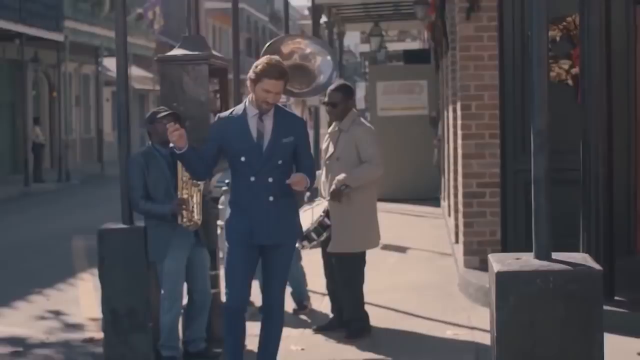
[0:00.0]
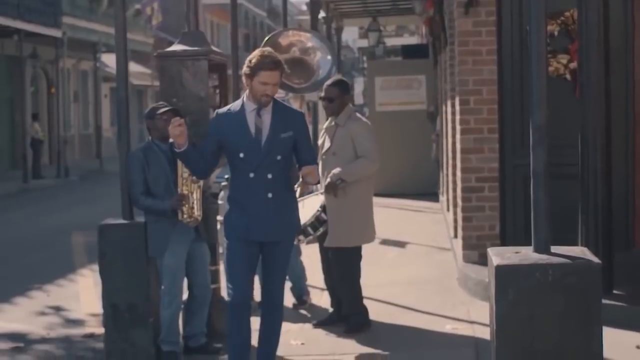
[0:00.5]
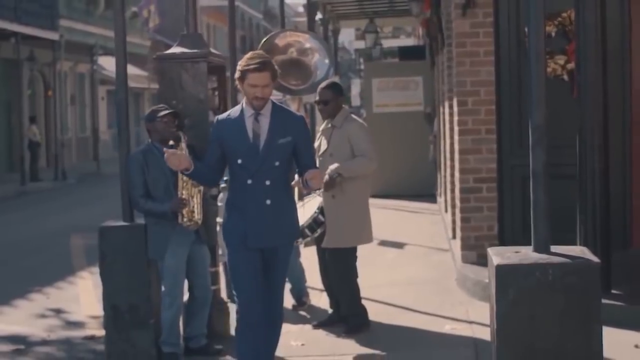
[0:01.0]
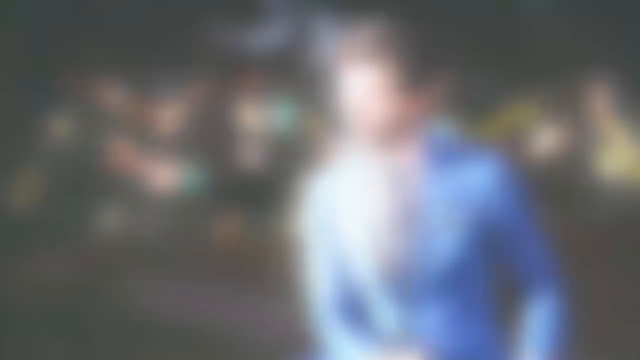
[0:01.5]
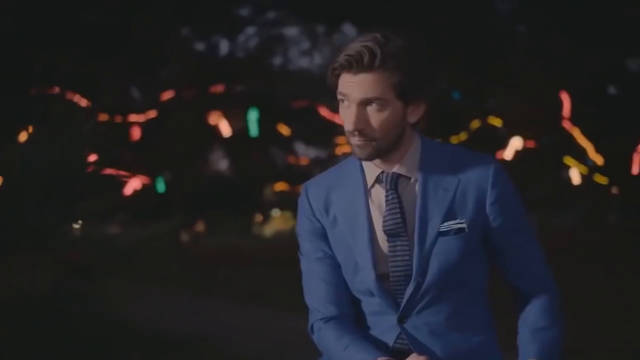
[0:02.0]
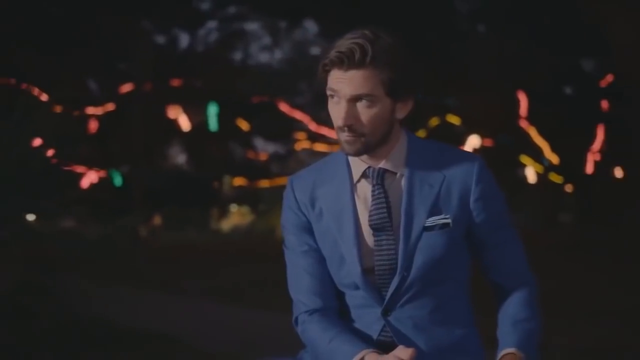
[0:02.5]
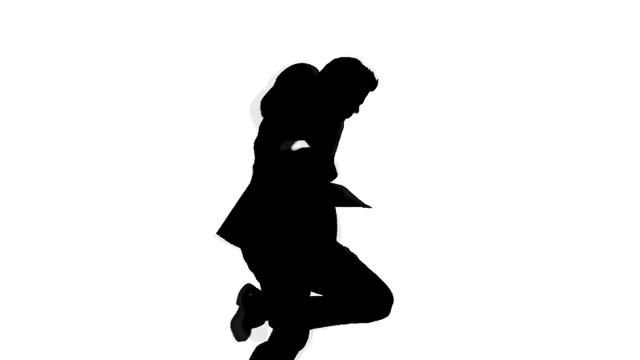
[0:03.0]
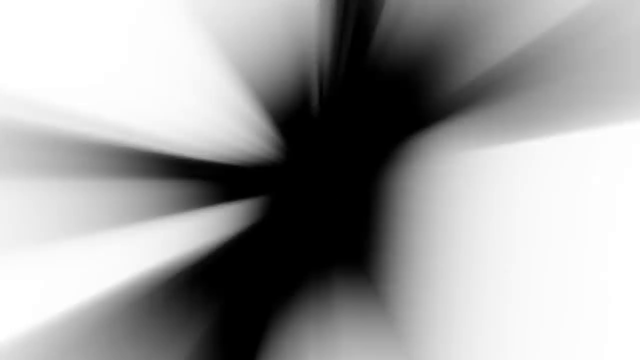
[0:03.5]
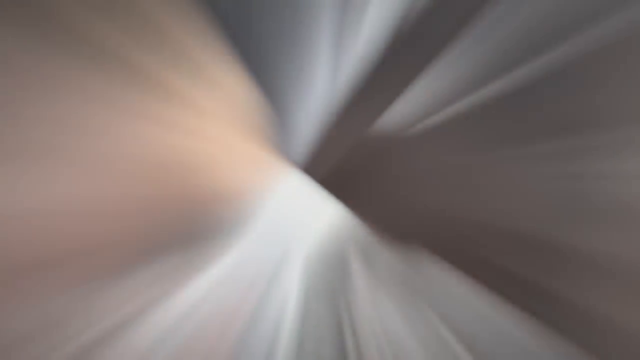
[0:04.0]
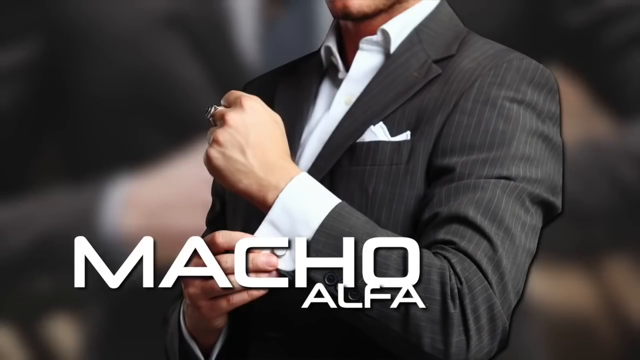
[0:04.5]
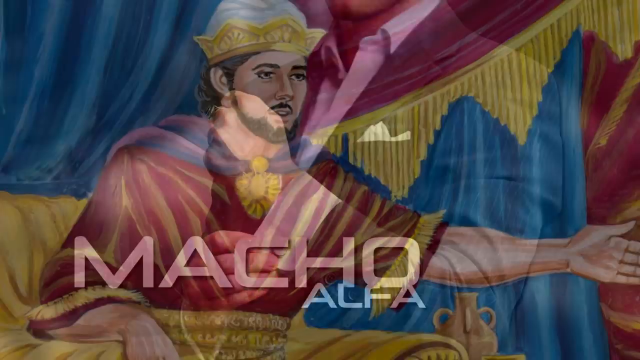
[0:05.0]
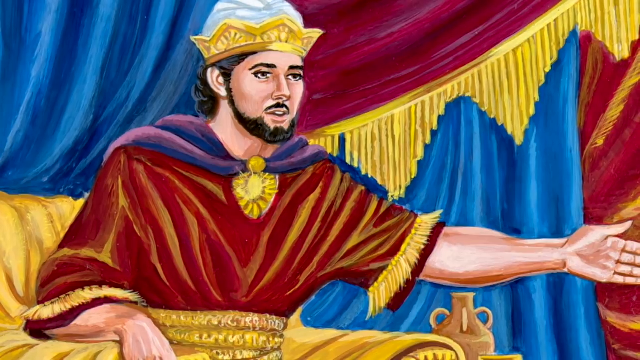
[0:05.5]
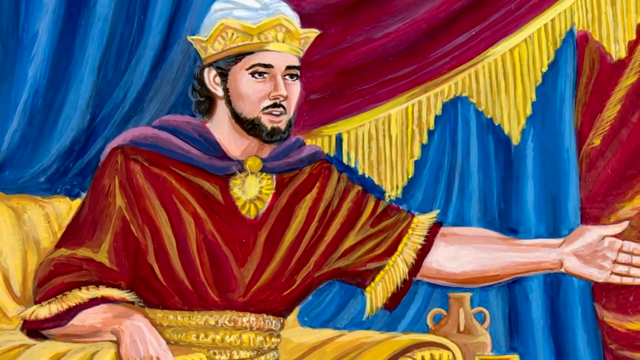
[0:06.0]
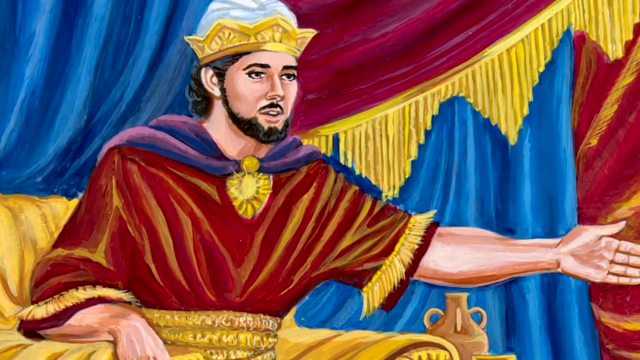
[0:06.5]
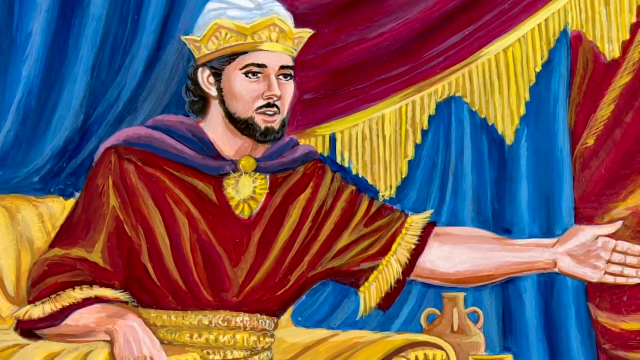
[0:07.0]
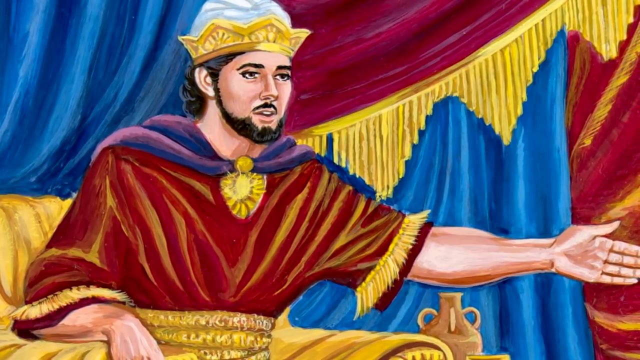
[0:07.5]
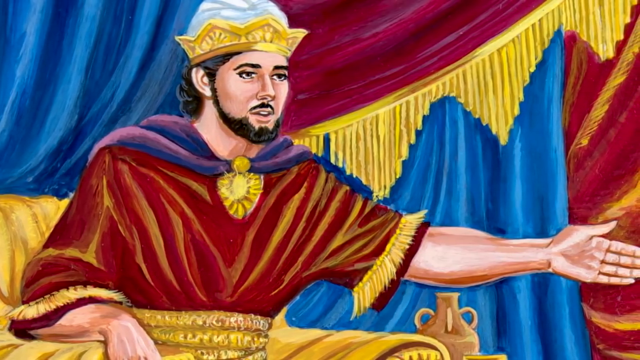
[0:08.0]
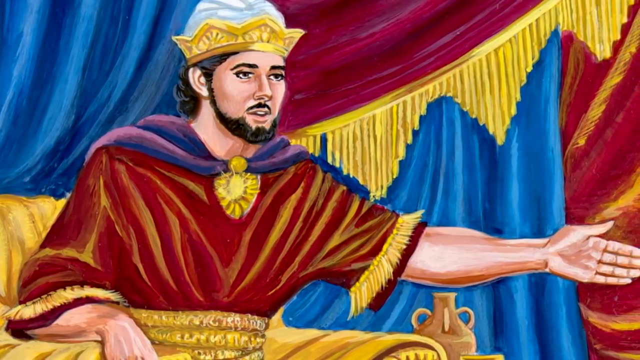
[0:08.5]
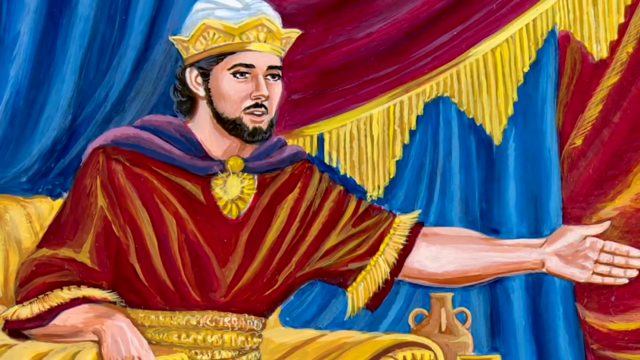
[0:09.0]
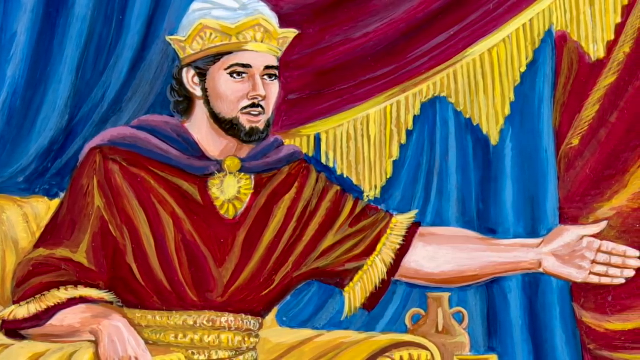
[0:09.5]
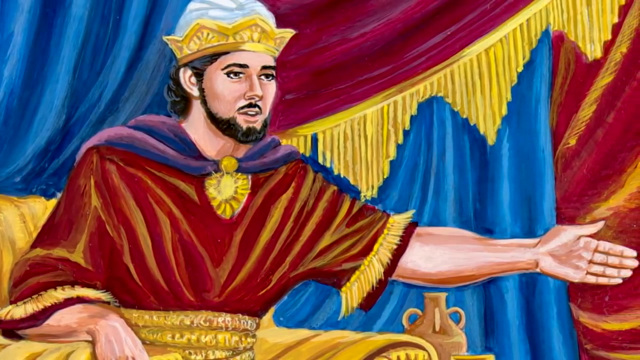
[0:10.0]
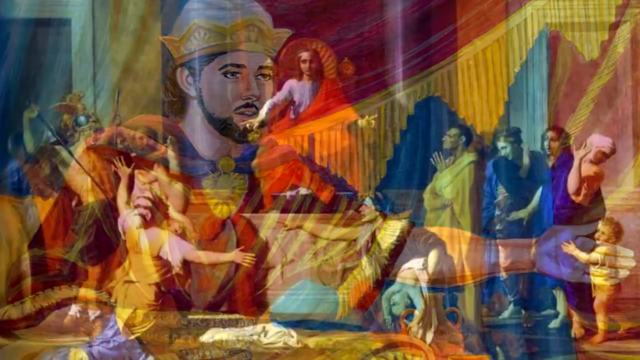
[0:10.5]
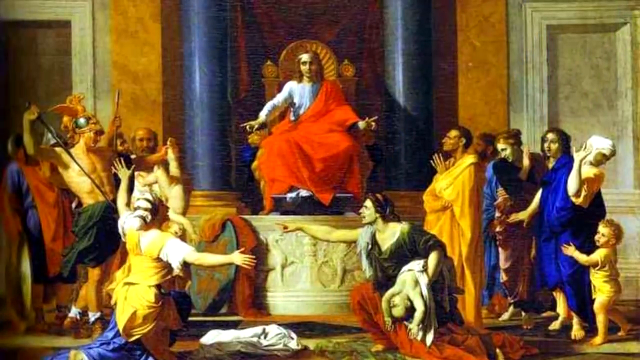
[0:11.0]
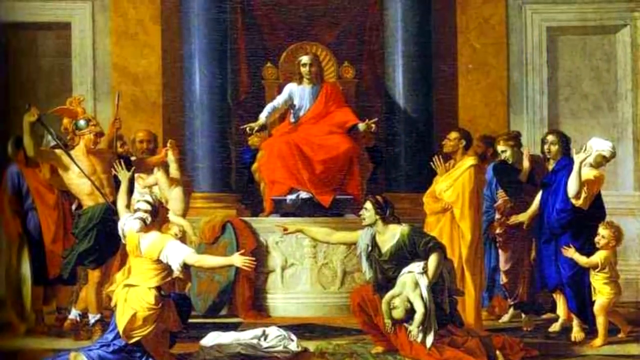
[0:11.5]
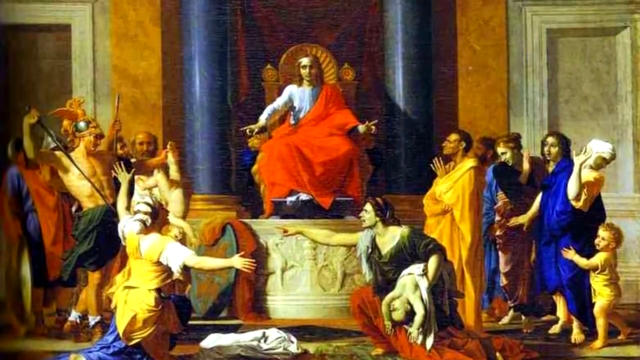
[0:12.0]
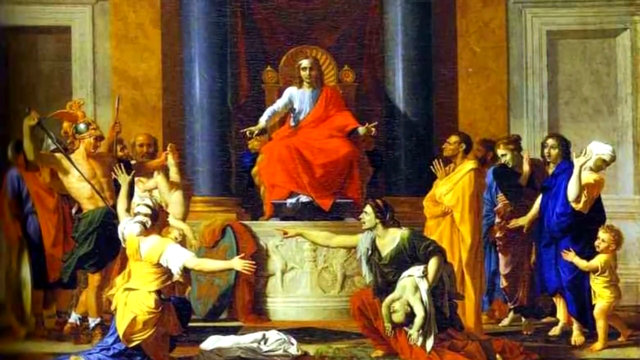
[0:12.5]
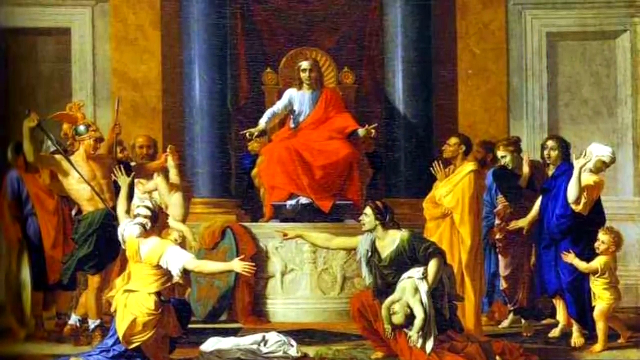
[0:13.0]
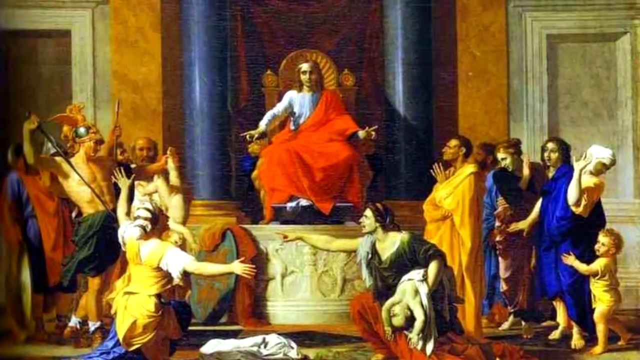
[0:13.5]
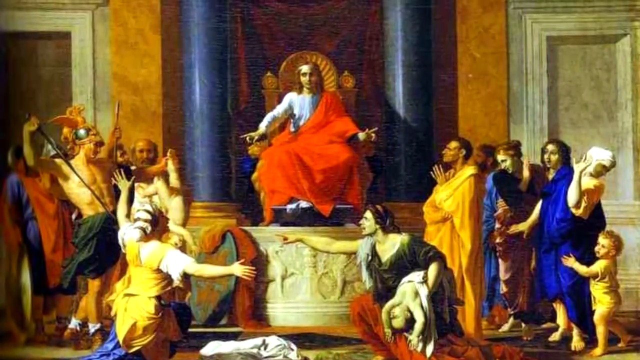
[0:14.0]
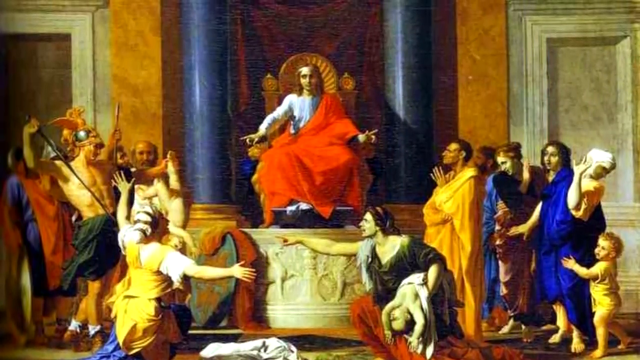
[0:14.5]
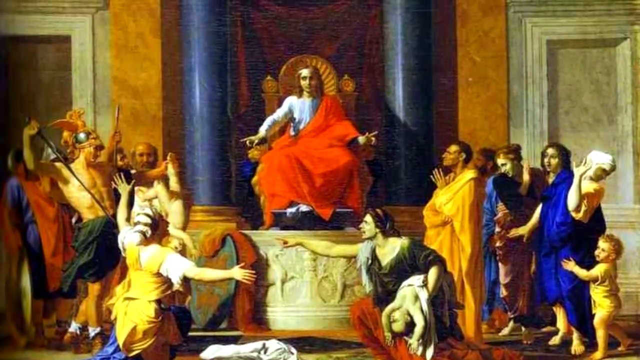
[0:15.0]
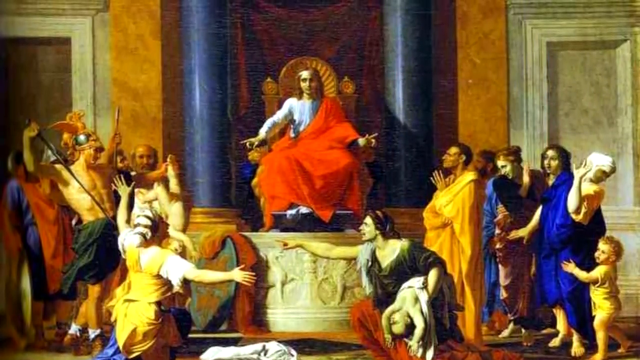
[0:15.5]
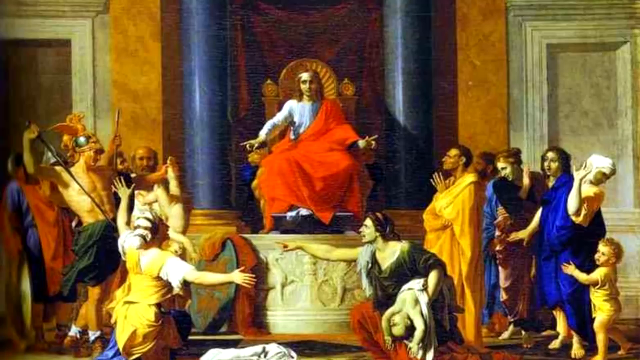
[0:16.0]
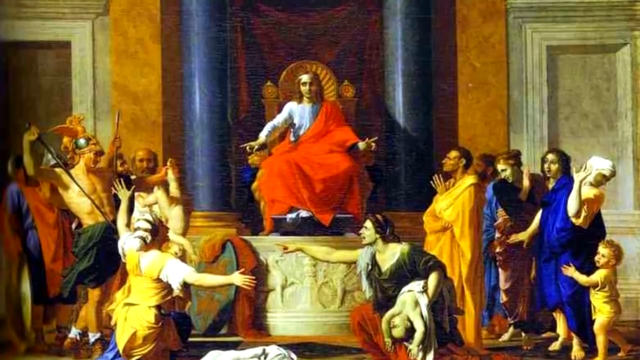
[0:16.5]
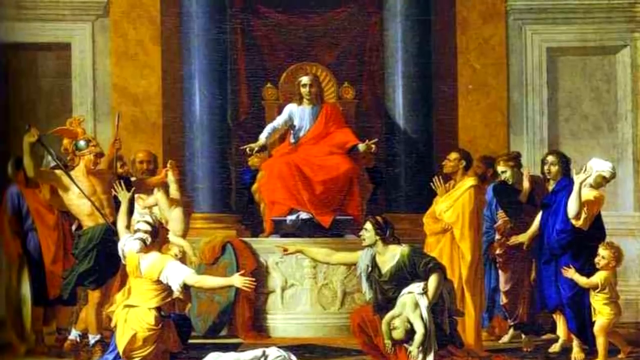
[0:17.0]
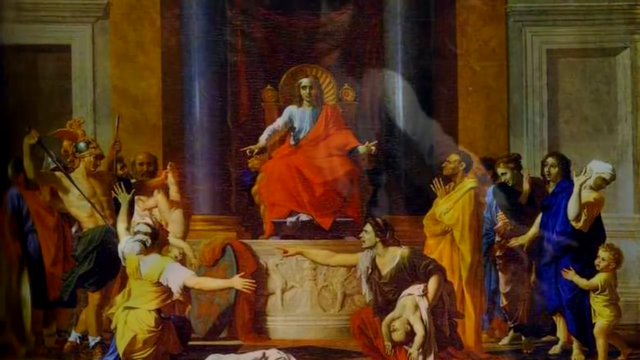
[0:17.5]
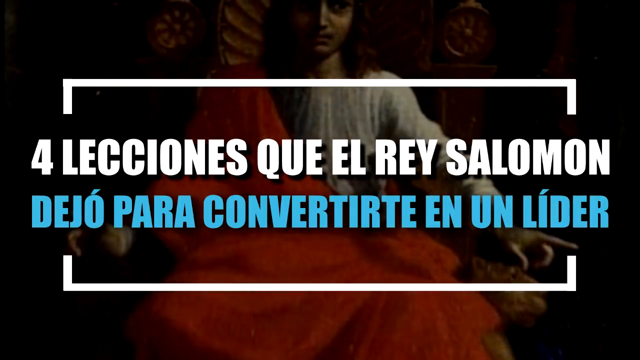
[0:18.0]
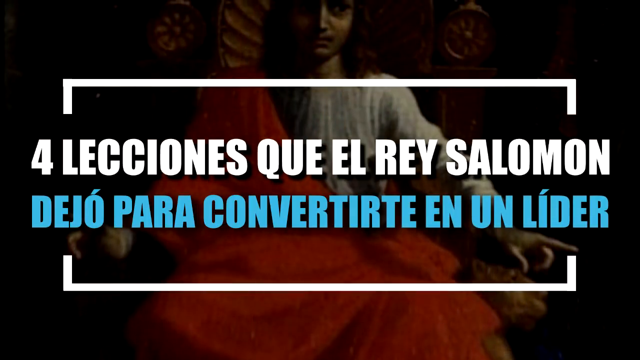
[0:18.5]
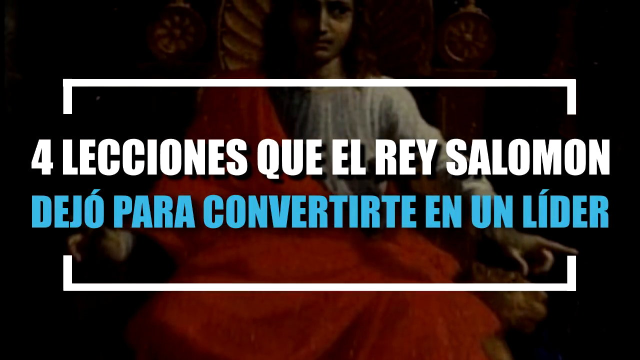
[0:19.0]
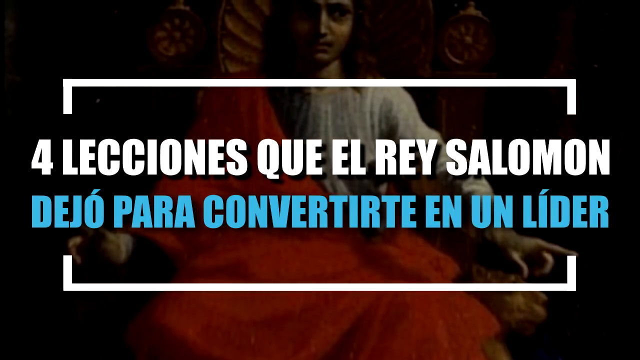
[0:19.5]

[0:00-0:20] The footage is possibly from a movie and appears to be set in the 1920s. It opens in a city in daylight, where a man in a very nice blue suit with his hair done up is shown, with two African-American men behind him. The scene switches to a dark setting where there appear to be tube lights all over the trees, and the same man in the blue suit is still there; he is very handsome and probably in his 30s. Next comes a white background with a black shadow shape dancing. Then, against a blurry background, a man in a pinstripe suit with a white shirt fiddles with the buttons on his wrist, and he is wearing a ring; the words "macho alpha" appear on him. What appears to be a drawing from ancient times follows, showing a man in a robe in some type of cloth tent. Another scene that looks to be from ancient times shows a man on a throne wearing a half-draped robe, with people all around him who look kind of in awe, while some of them look angry. Text that is not in English then appears on the screen.